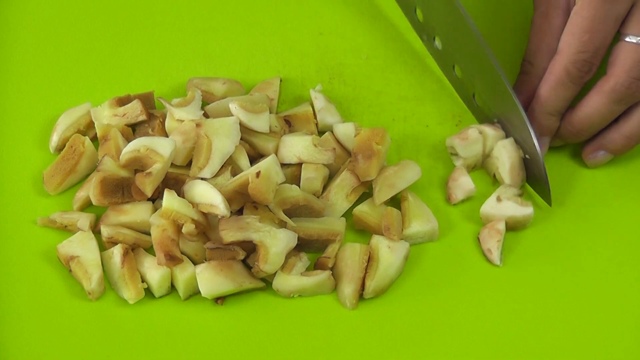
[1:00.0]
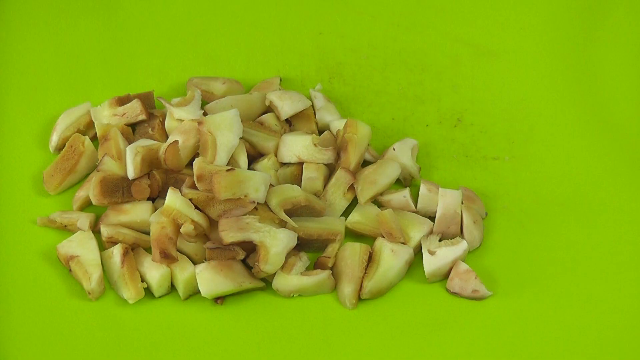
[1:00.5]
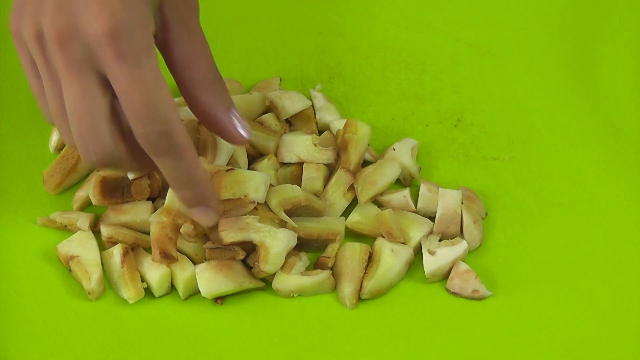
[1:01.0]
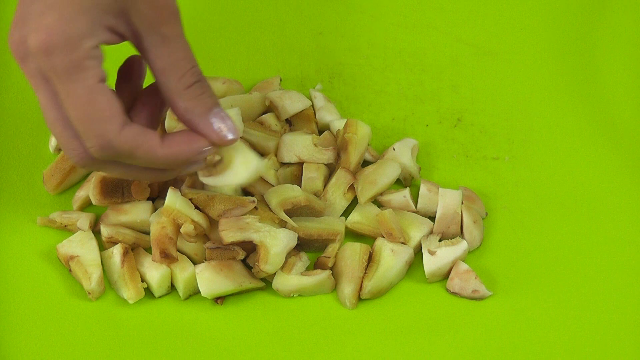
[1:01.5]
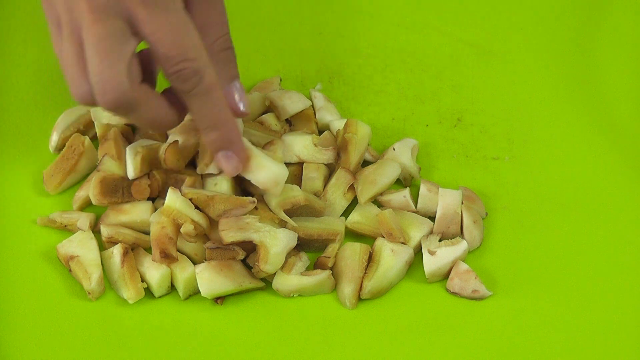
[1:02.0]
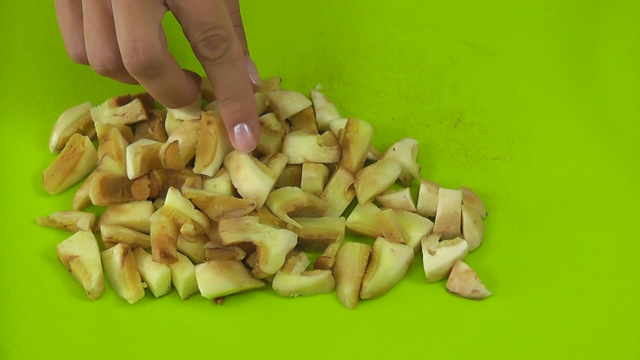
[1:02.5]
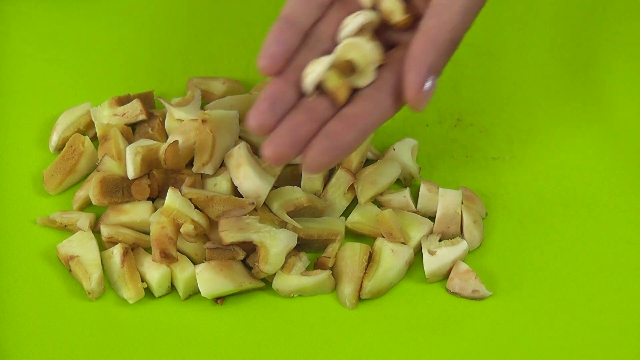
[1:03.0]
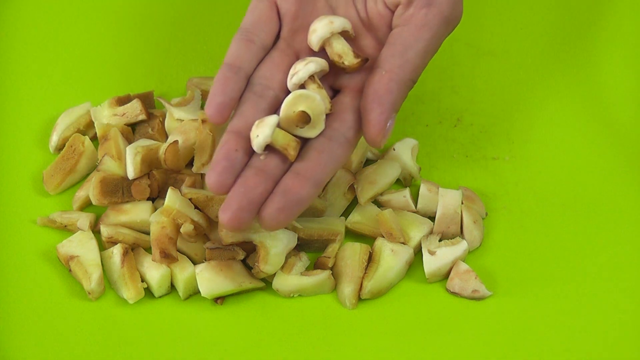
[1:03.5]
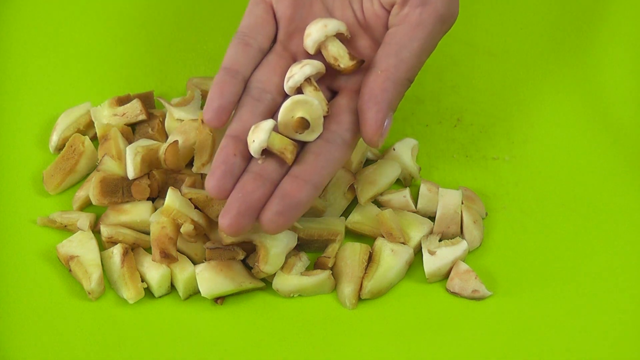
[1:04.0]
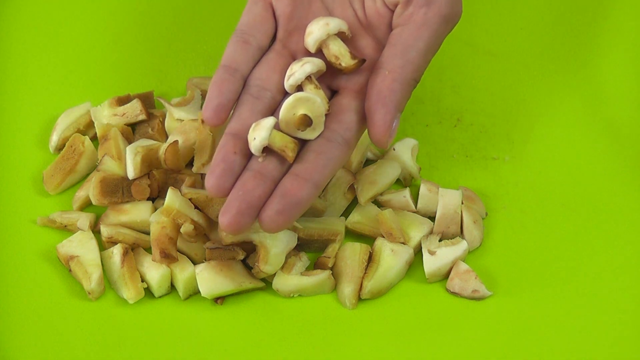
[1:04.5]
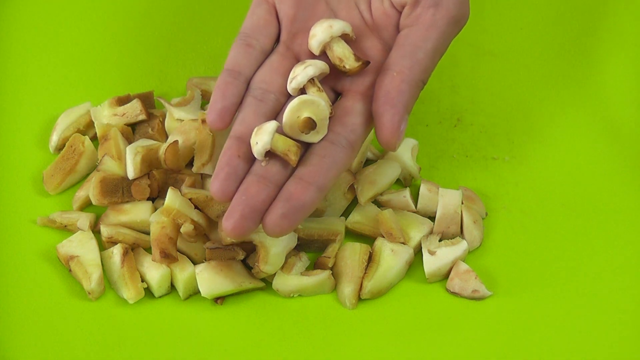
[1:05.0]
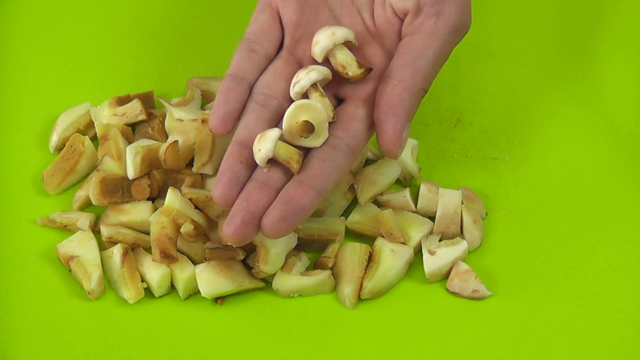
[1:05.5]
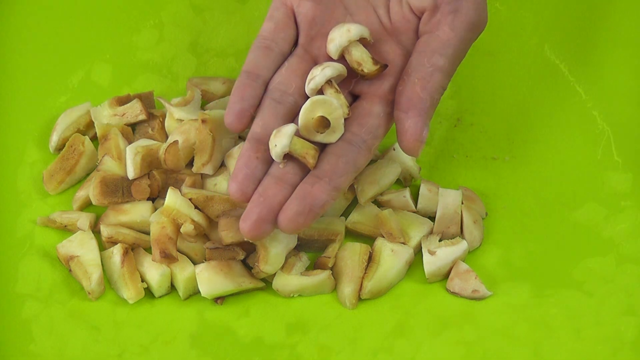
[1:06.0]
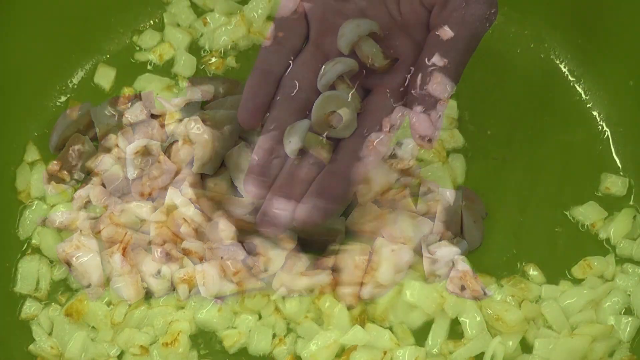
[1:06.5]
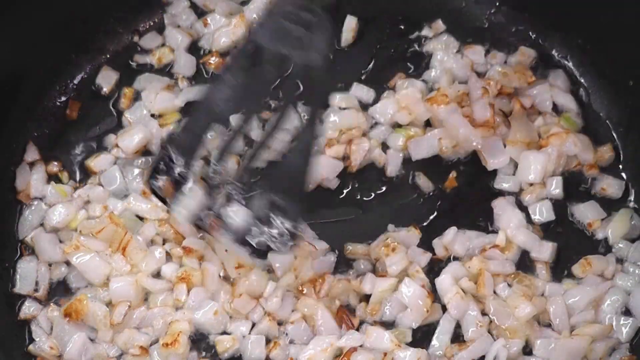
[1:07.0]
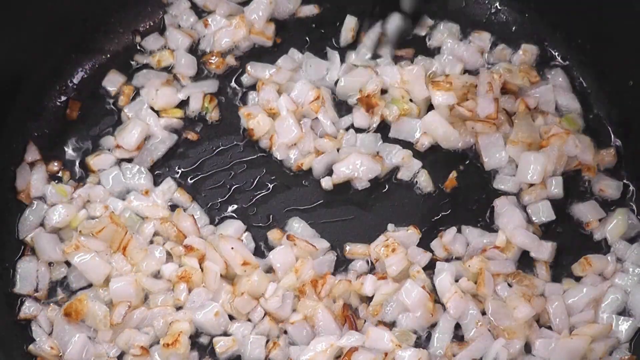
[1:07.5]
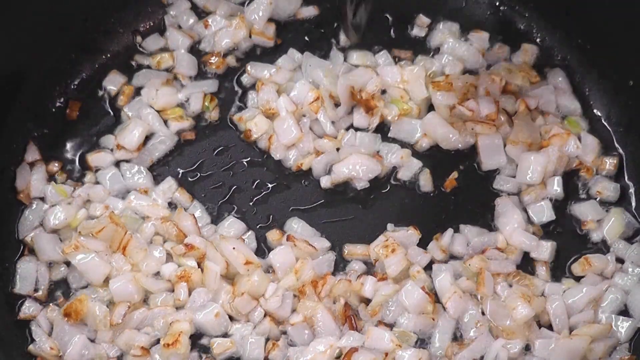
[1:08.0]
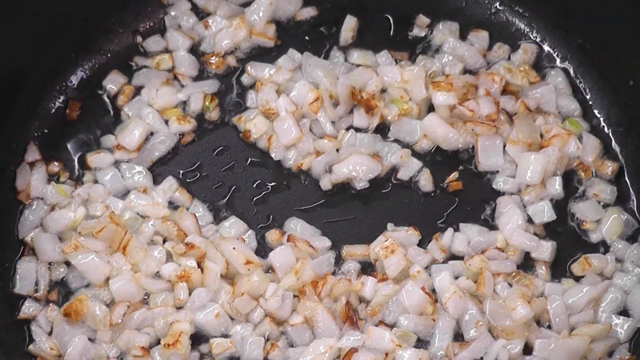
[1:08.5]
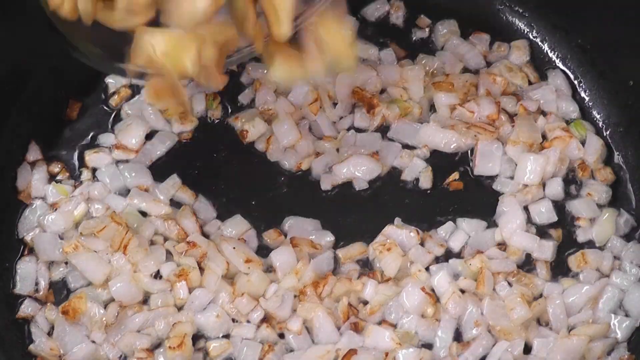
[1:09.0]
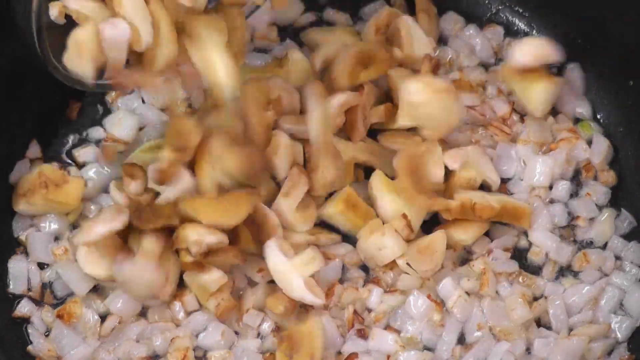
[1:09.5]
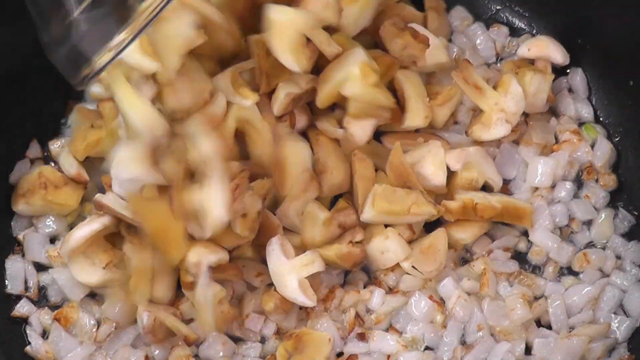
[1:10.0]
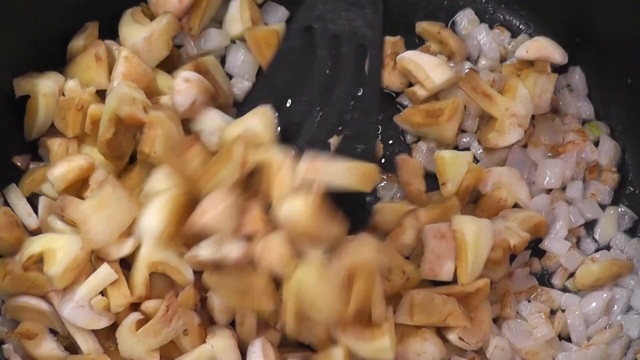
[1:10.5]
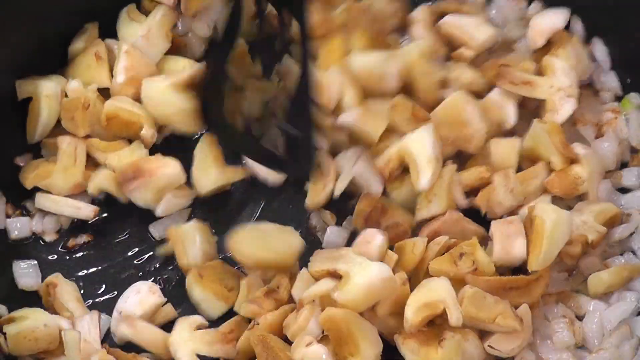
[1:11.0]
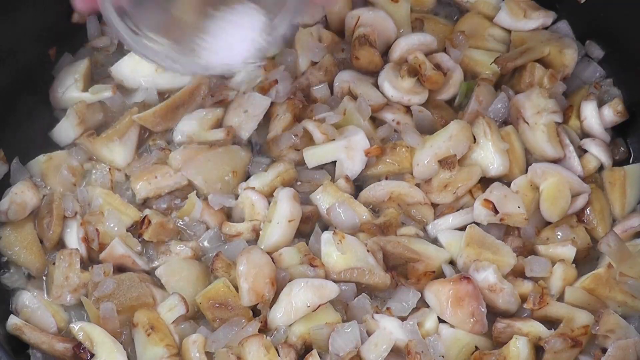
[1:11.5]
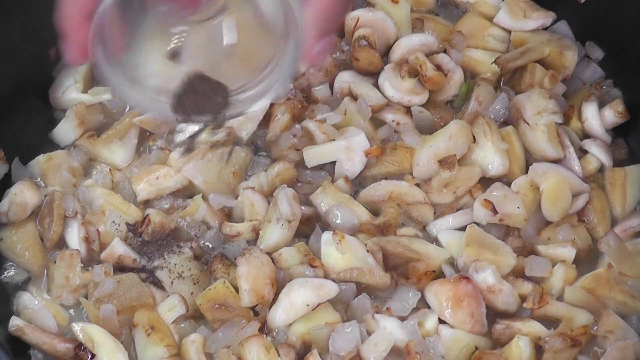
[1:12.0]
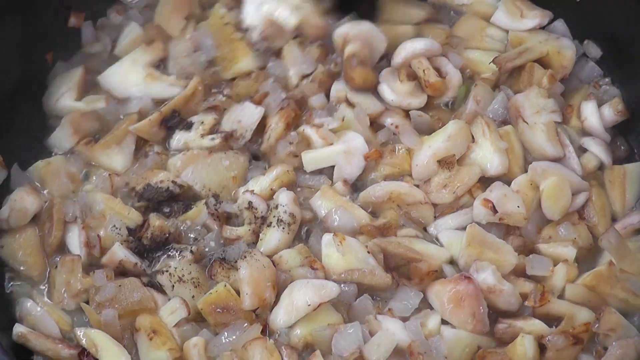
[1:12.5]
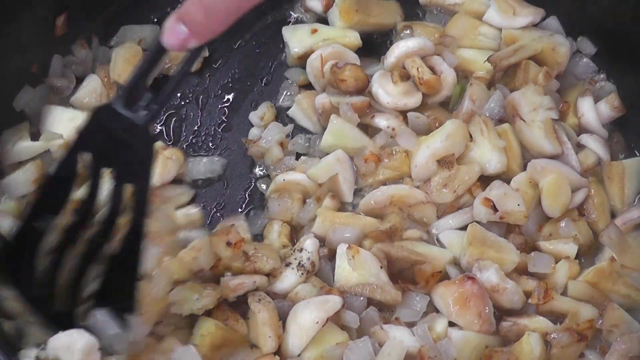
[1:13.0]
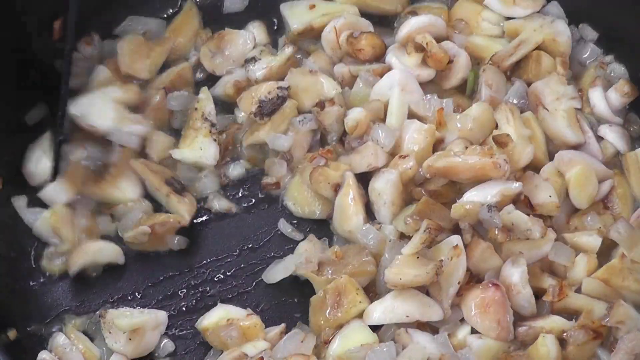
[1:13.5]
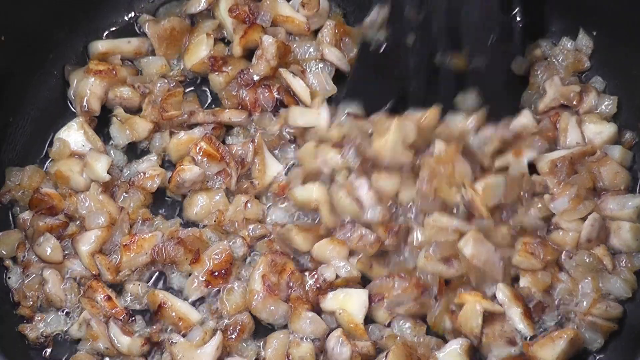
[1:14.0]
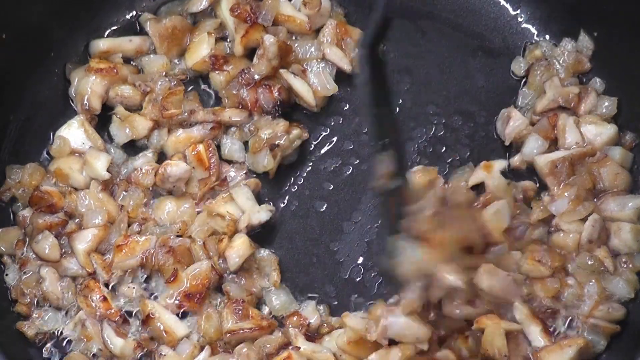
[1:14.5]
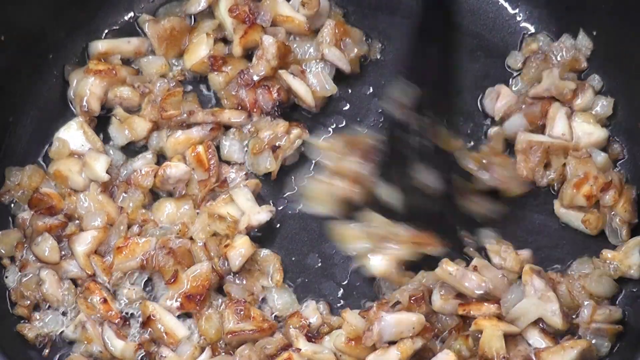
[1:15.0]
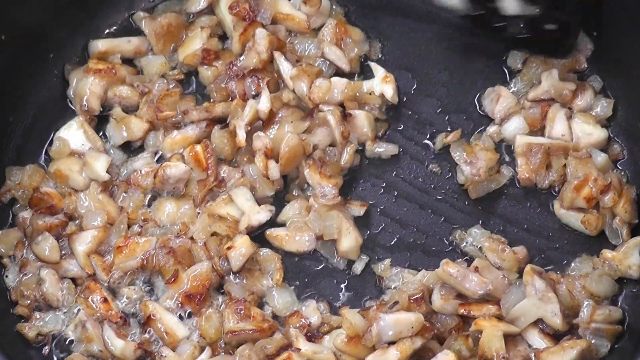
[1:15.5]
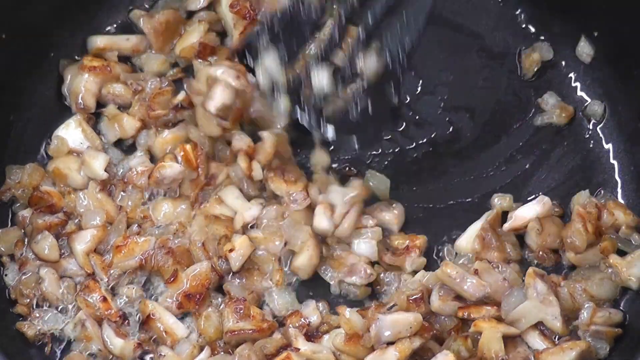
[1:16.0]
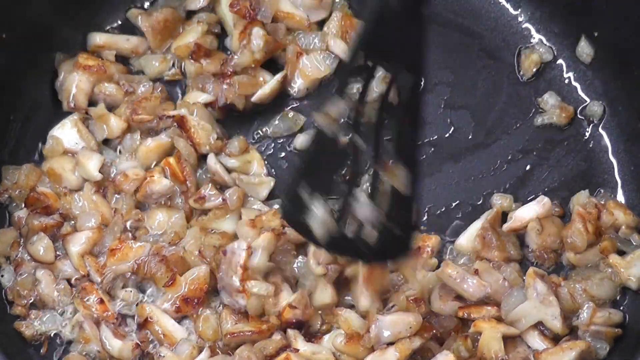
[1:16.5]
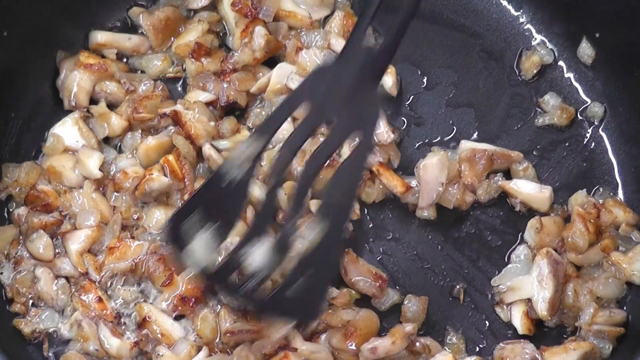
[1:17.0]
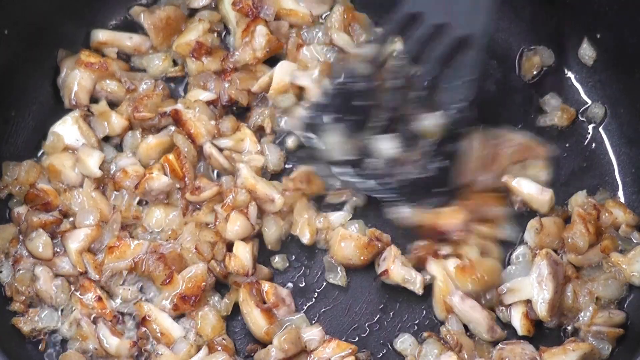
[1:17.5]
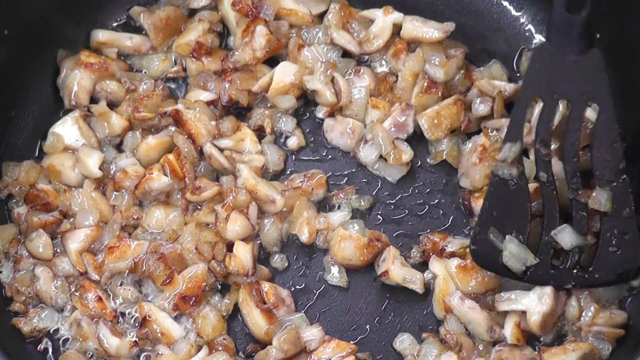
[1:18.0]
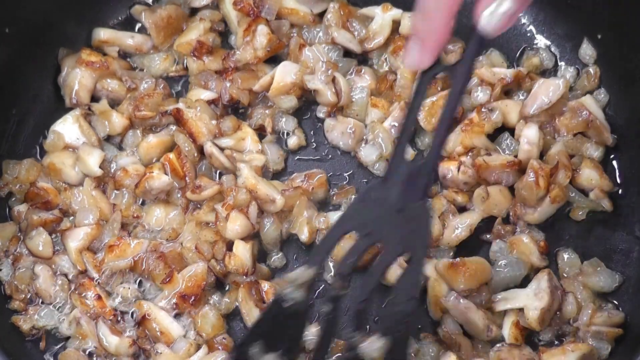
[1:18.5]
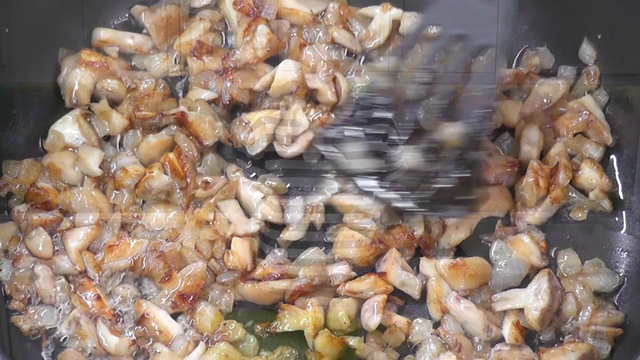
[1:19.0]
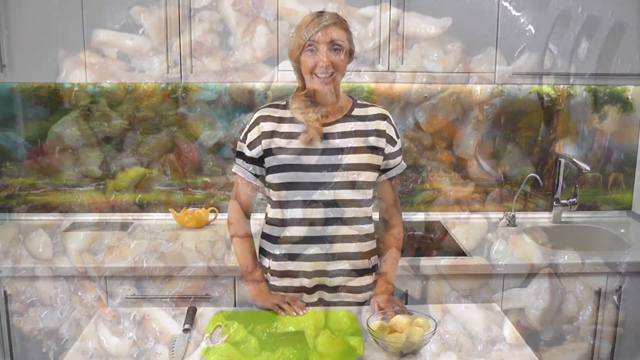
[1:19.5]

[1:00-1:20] Her fingers hold down what may be an onion or a potato, and her nails are orange. She starts dicing the onion and seems to show the size of the pieces. She adds mushrooms to the pan, turning around; the oil is visible as the mushrooms go in. She mixes them, adds salt and pepper, stirs, and slides things around the pan, where the heat can be seen coming off the oil. She is then back to talking, wearing the same black and white shirt, with the cutting board still in front of her and the cupboards and her kitchen area visible.